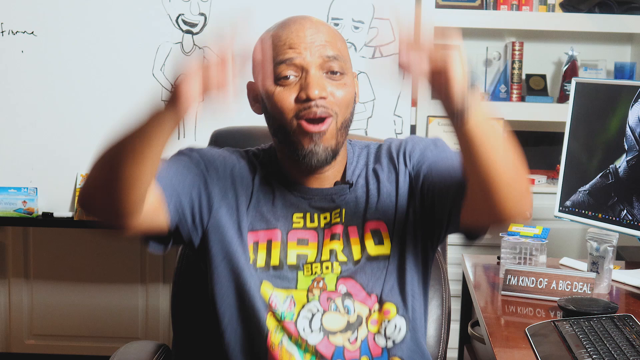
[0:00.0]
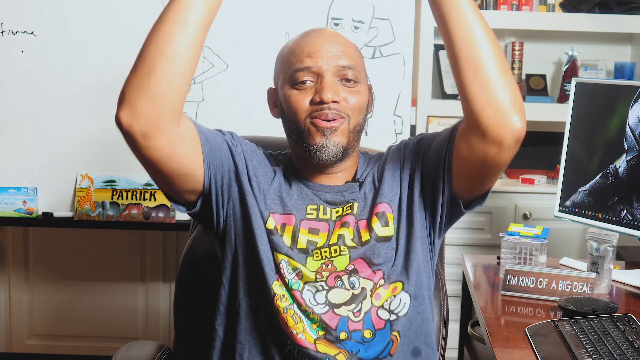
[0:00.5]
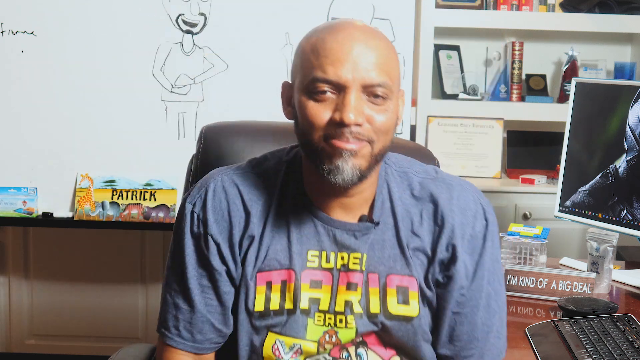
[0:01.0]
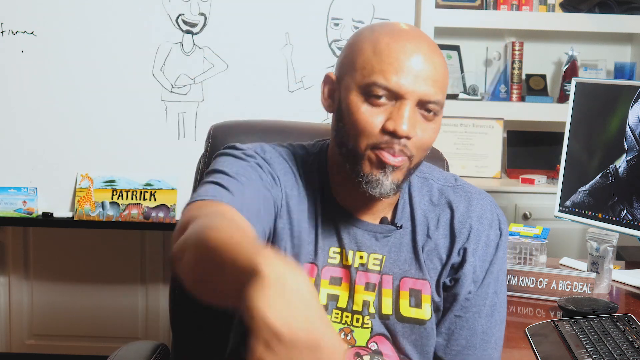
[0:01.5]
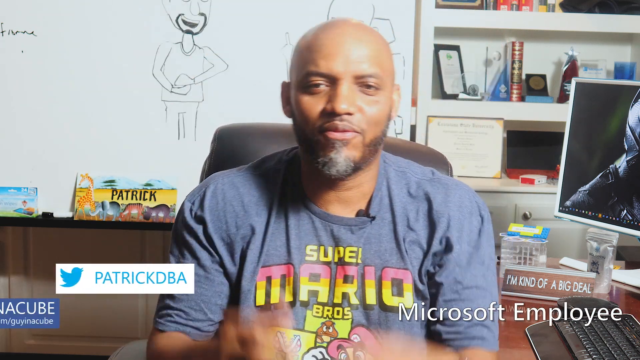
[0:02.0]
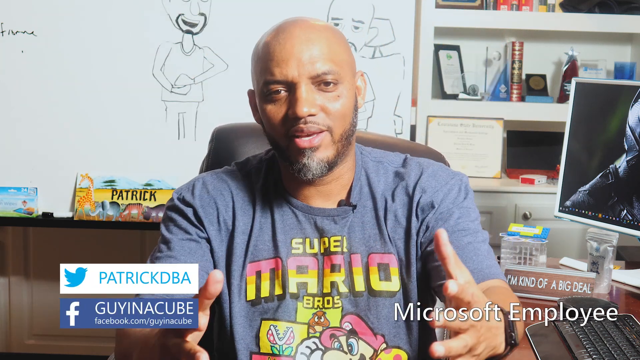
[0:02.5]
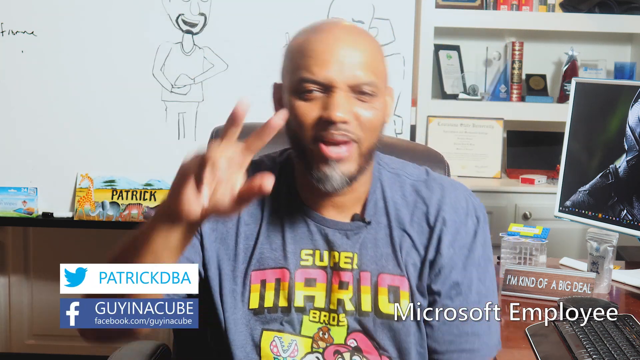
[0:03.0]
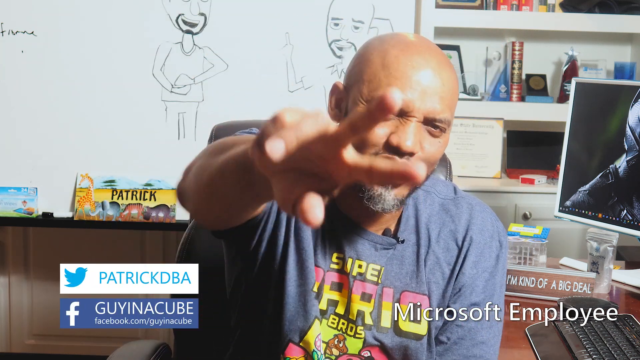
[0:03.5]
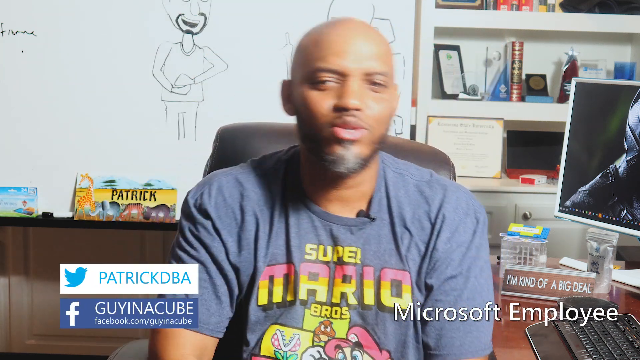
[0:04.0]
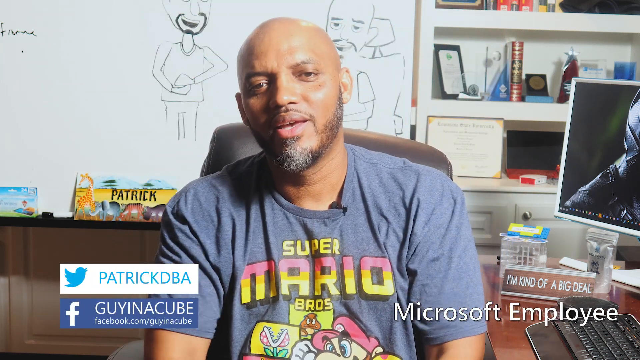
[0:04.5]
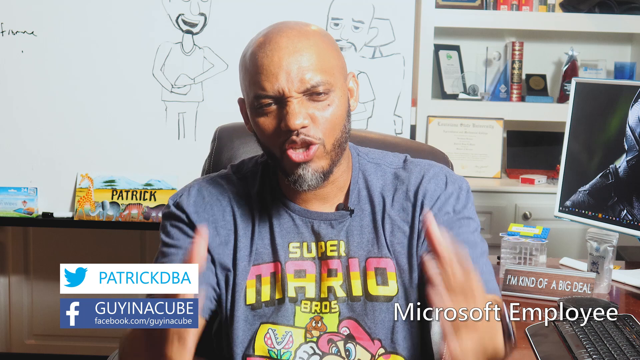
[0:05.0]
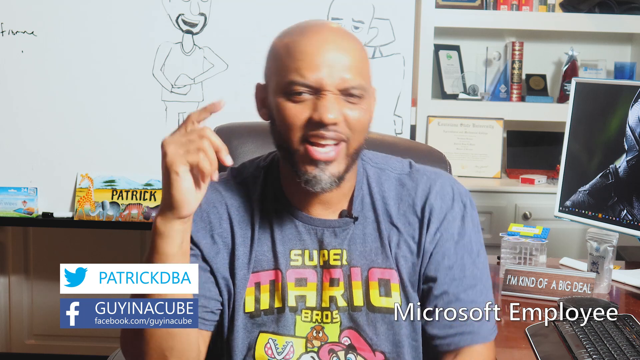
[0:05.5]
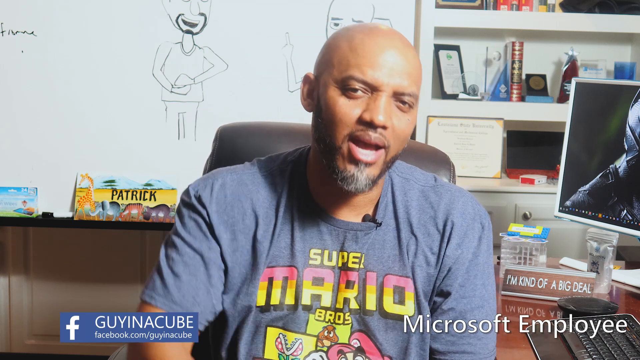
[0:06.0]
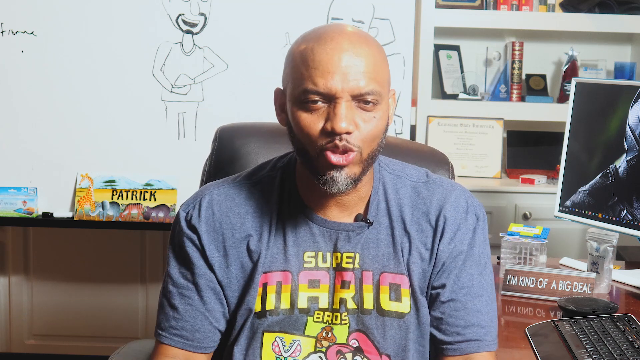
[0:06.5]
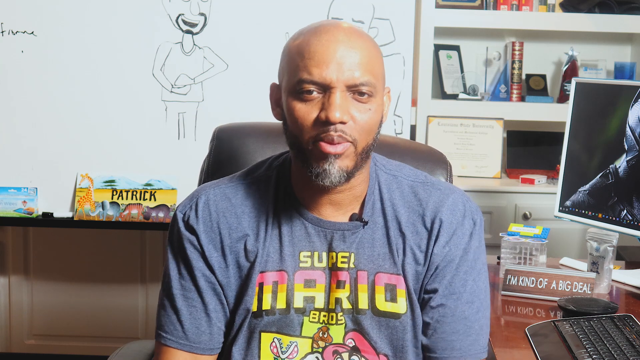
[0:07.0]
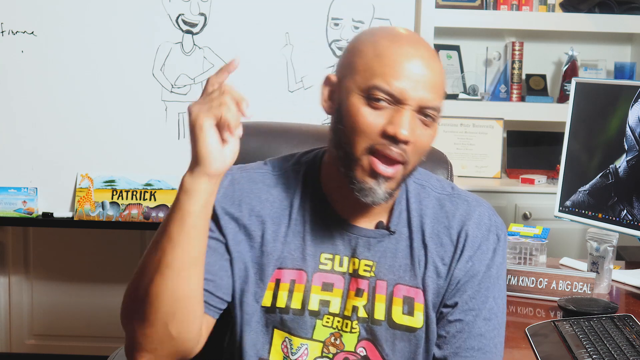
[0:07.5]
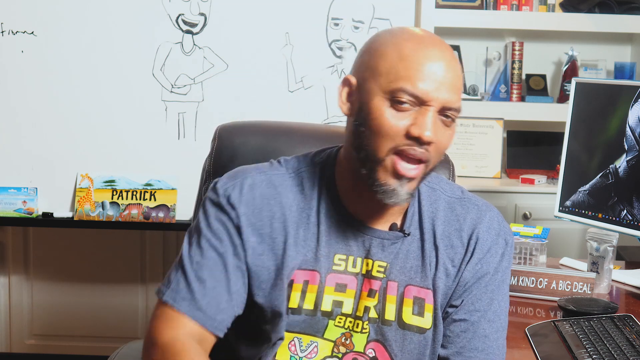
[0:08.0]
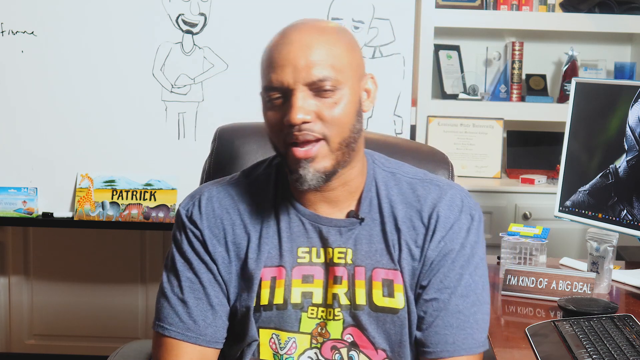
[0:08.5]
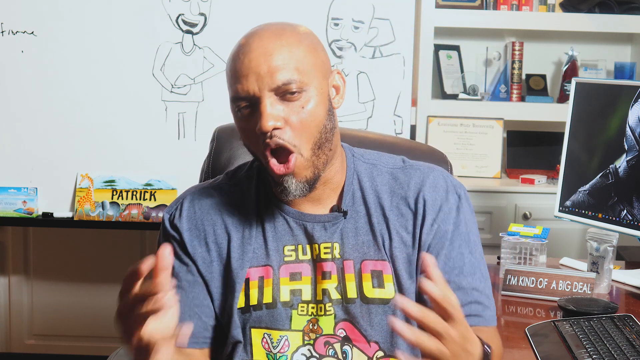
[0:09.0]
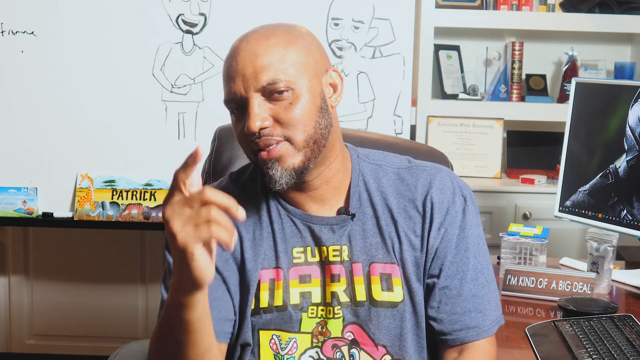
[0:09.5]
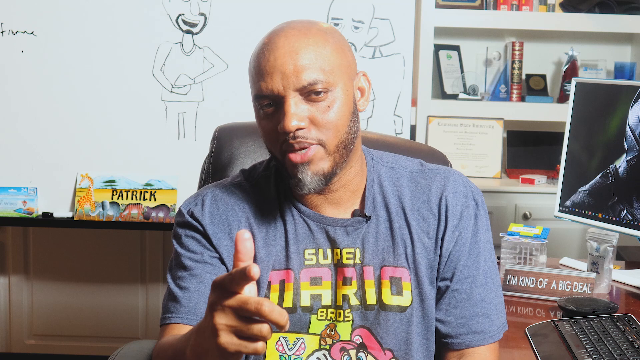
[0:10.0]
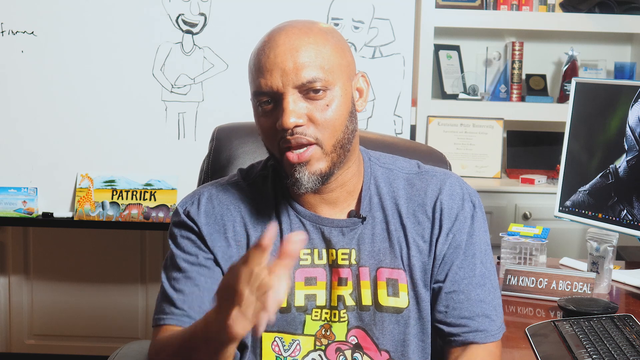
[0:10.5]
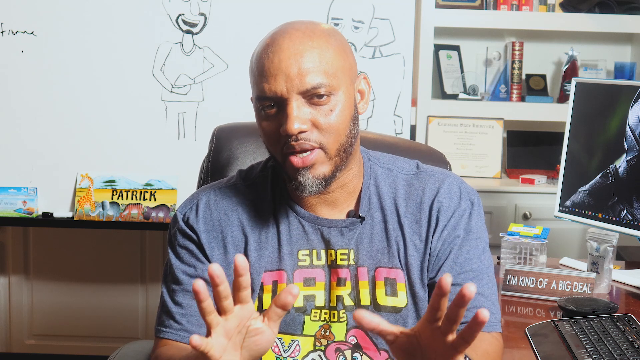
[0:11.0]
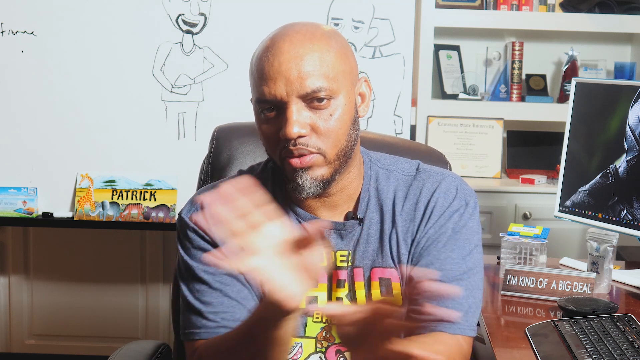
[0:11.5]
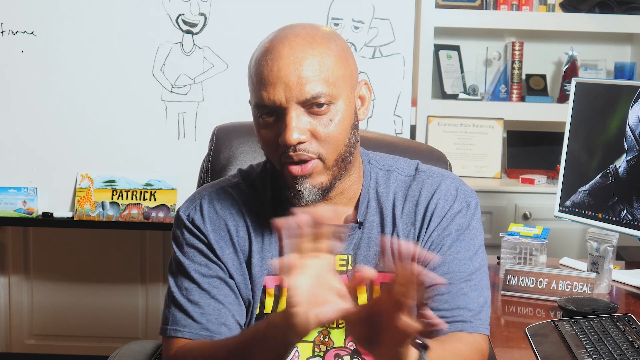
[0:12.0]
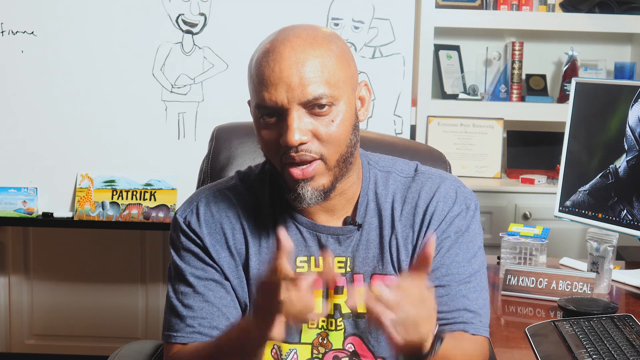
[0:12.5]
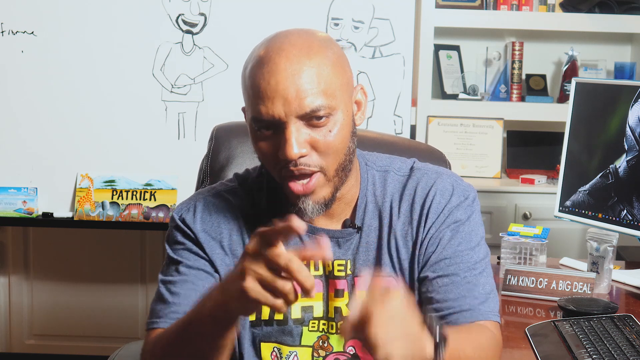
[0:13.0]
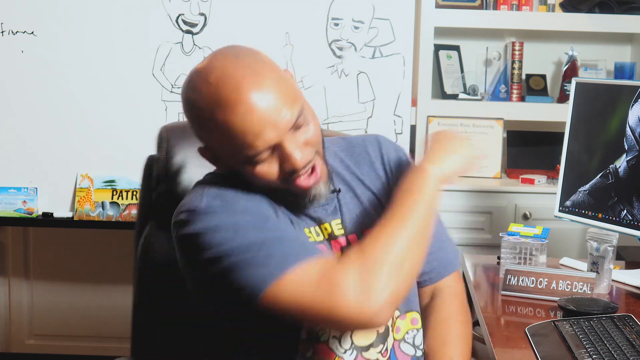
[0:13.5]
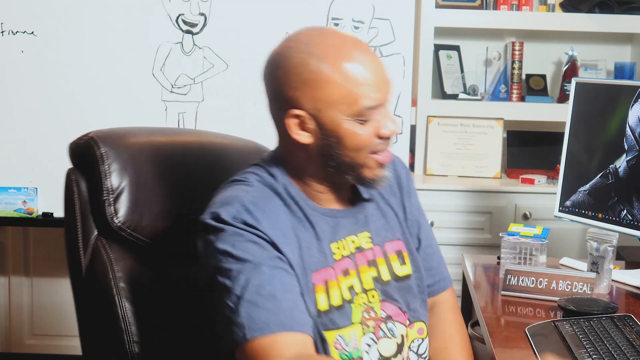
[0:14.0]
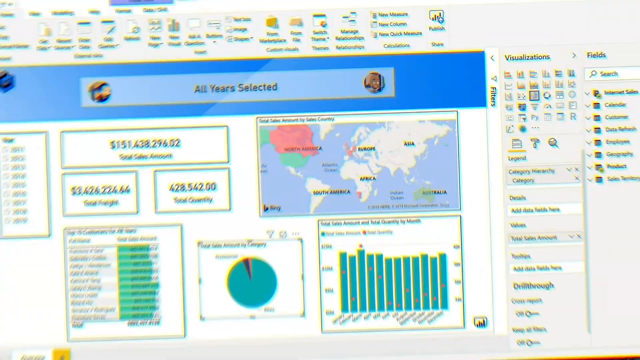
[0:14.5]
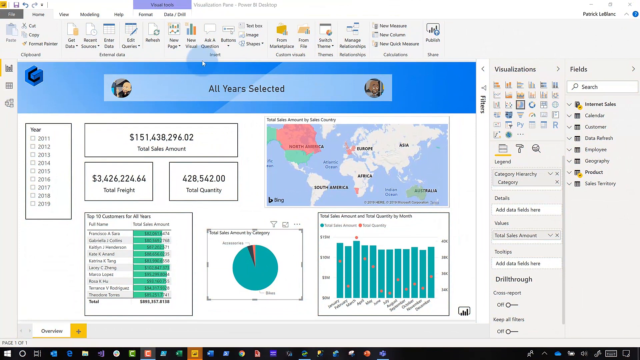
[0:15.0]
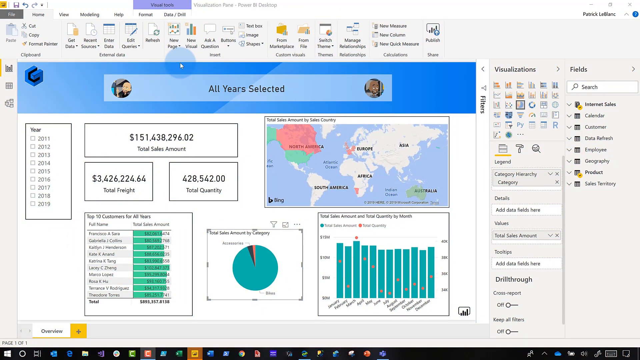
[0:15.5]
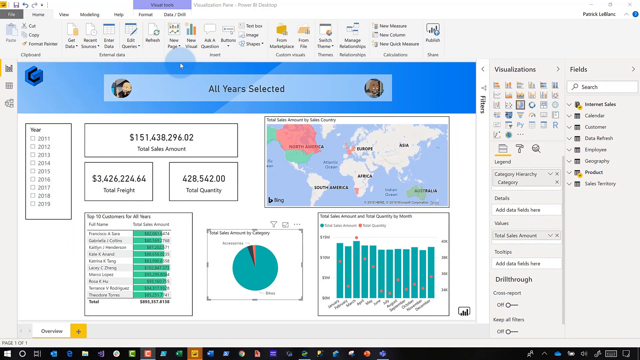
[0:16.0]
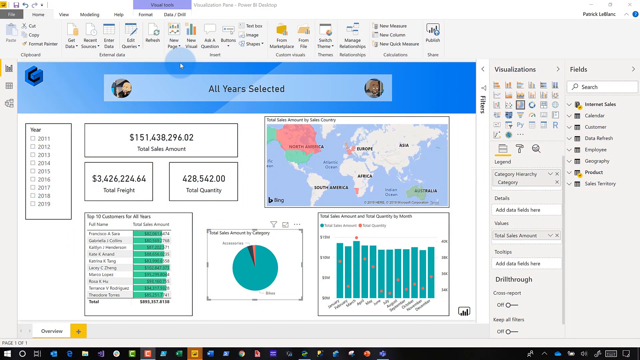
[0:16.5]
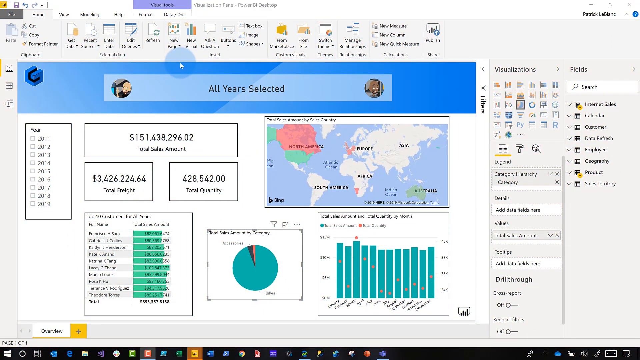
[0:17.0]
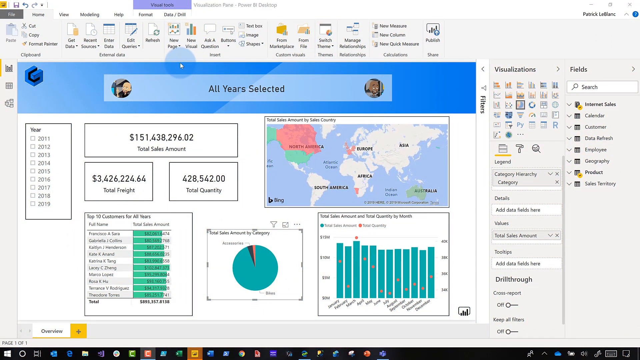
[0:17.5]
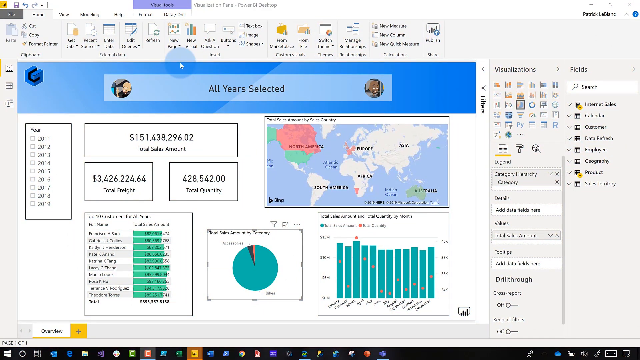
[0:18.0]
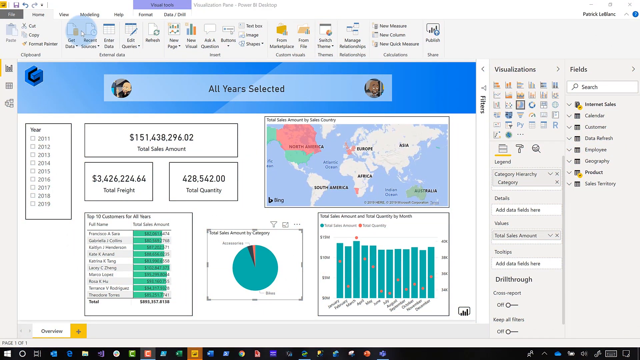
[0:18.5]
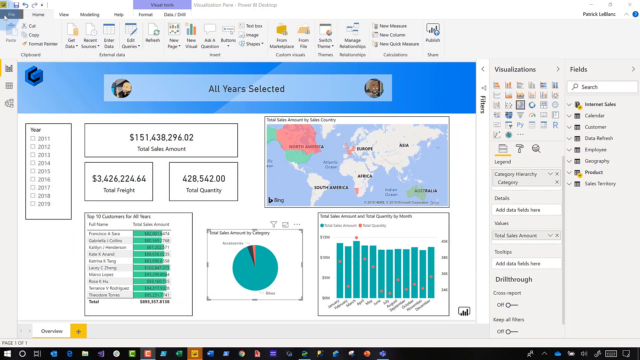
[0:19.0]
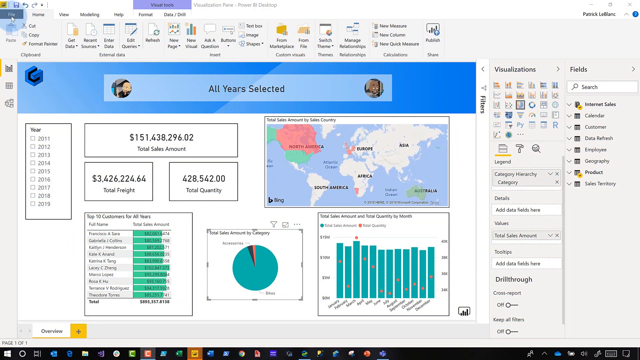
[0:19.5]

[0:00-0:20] A man sitting in a gaming chair throws his arms in the air, then points his right arm toward the screen. His Twitter username, Patrick DBA, appears on the left-hand side along with his Facebook username, and text on the right says he is a Microsoft employee. He wears a Super Mario Bros. t-shirt. He sets both hands flat in front of him, then points at the screen again with his right hand while continuing to talk. Behind him is a whiteboard with two characters drawn on it. On the right-hand side are part of a computer screen and a keyboard, and in the background is a bookshelf holding what look like certificates and random items. The man waves his hands back and forth twice, points at the screen with both index fingers, swings his right hand around to point toward the bookshelf, and turns toward his computer. The view switches to a Microsoft tool of some sort: a white screen filled with economic information and a map, with the tools along the top and the right-hand side of the screen.